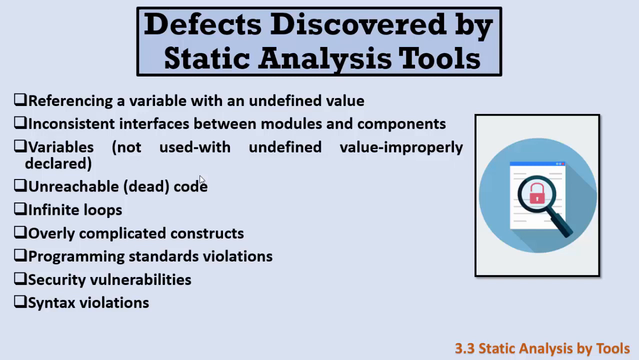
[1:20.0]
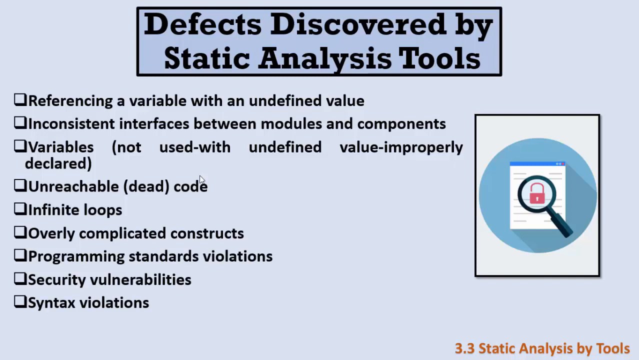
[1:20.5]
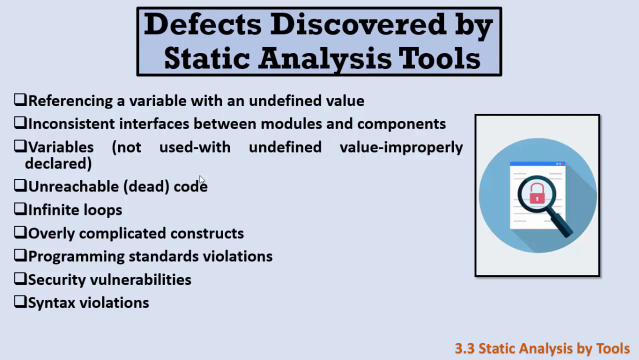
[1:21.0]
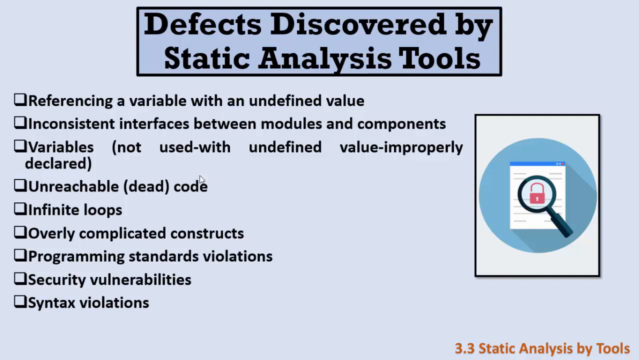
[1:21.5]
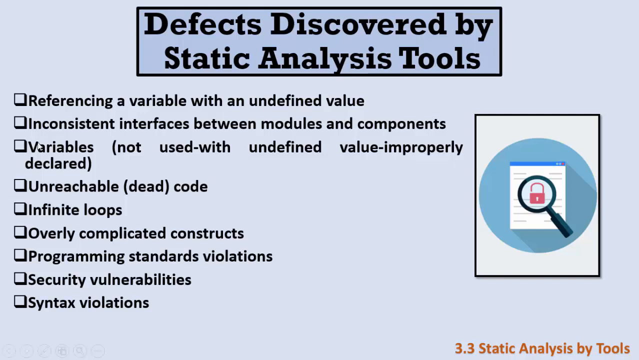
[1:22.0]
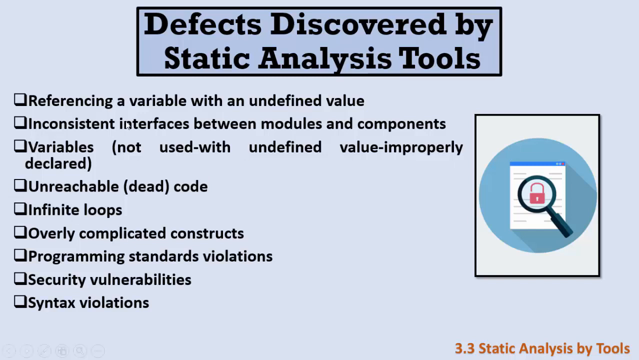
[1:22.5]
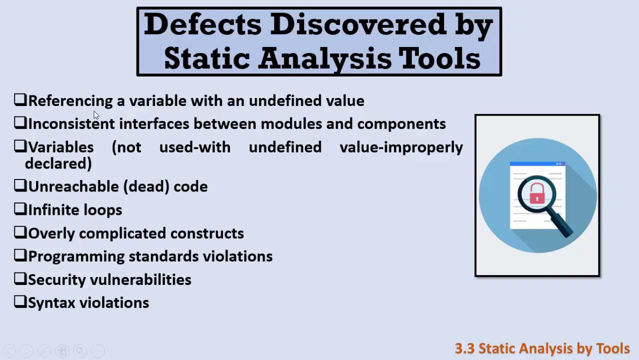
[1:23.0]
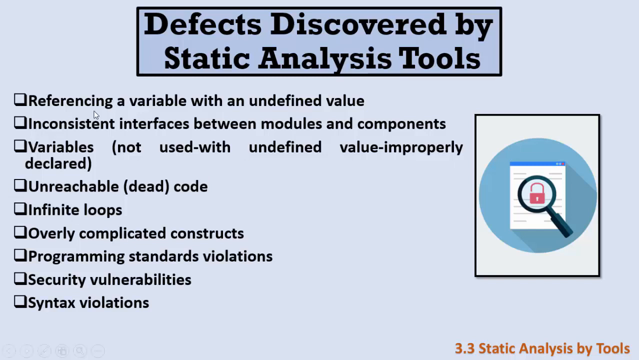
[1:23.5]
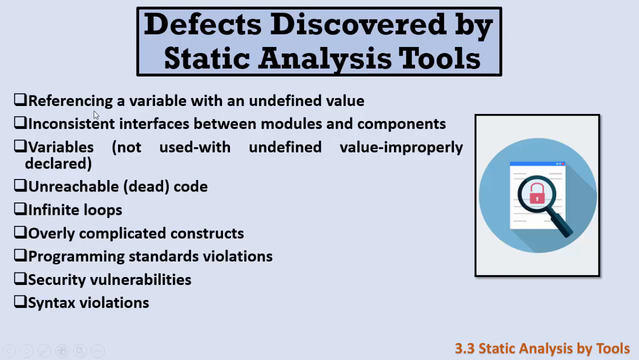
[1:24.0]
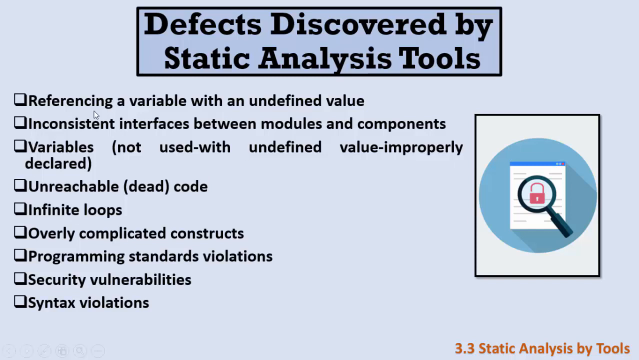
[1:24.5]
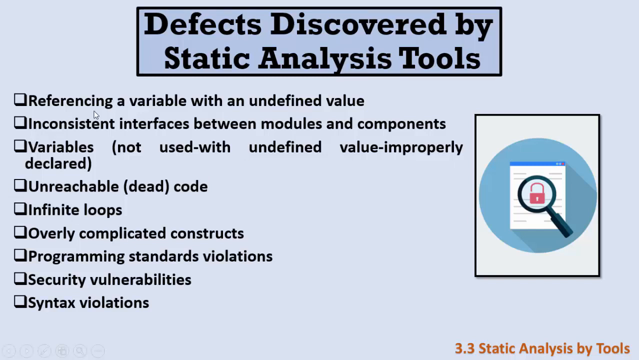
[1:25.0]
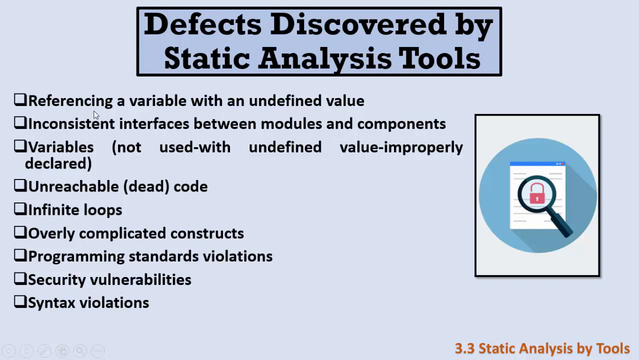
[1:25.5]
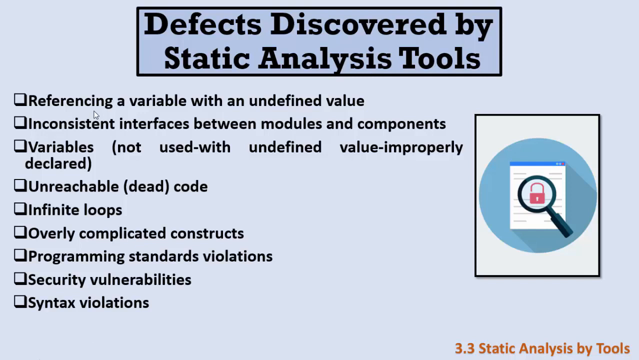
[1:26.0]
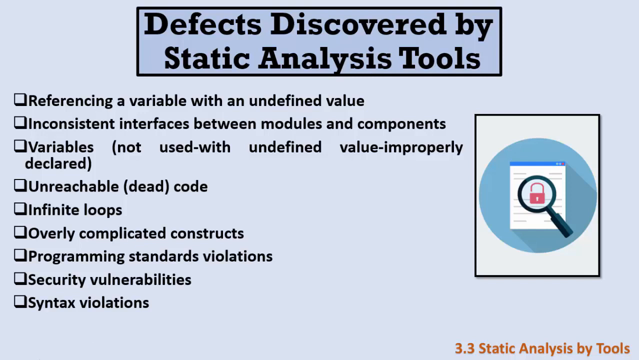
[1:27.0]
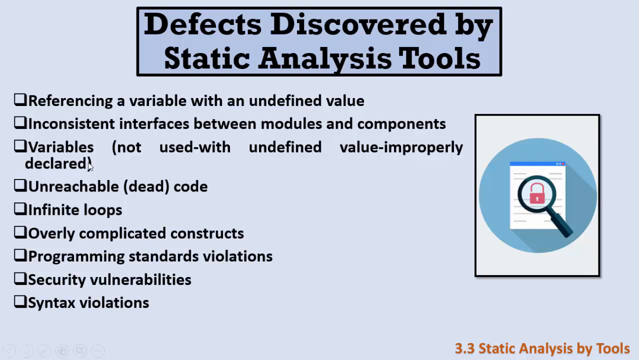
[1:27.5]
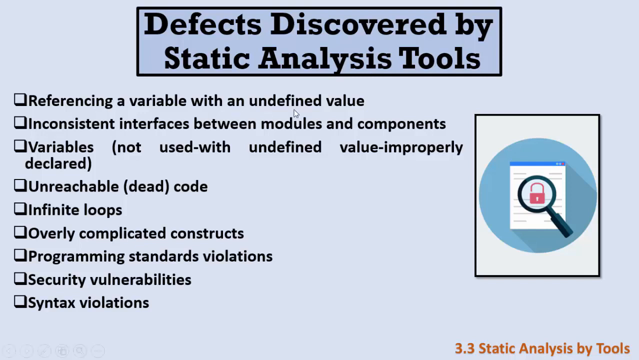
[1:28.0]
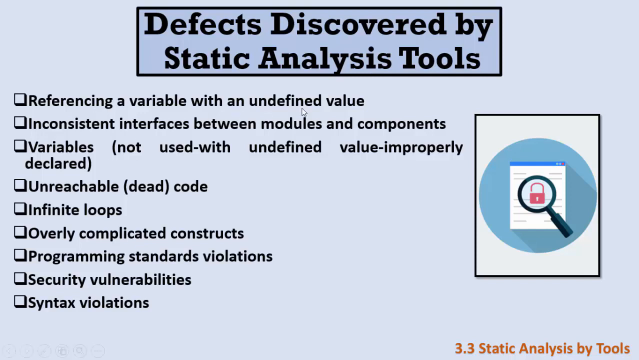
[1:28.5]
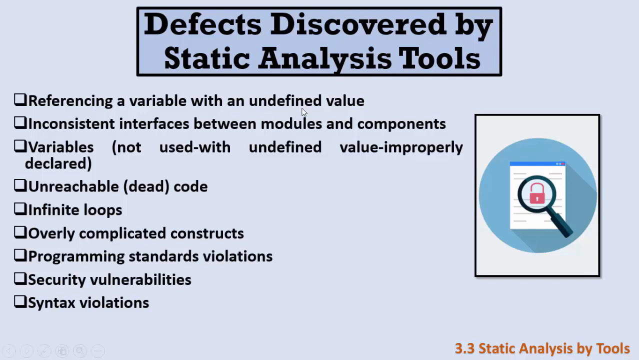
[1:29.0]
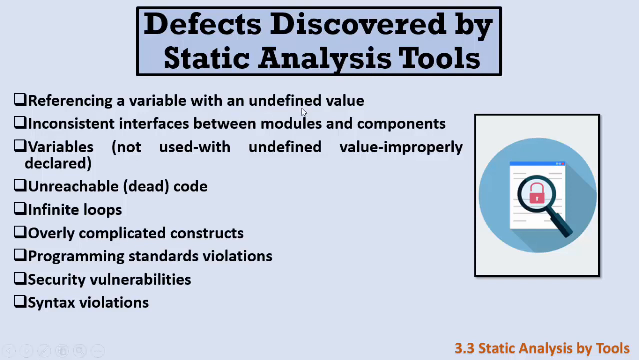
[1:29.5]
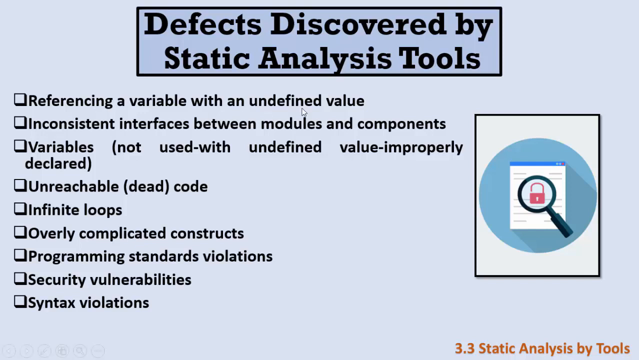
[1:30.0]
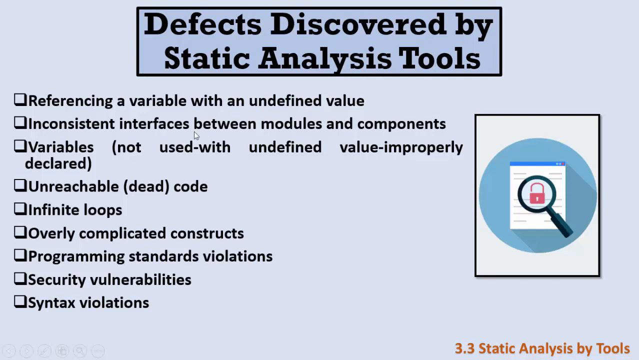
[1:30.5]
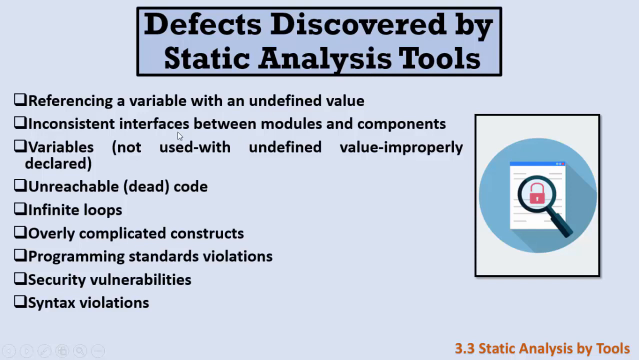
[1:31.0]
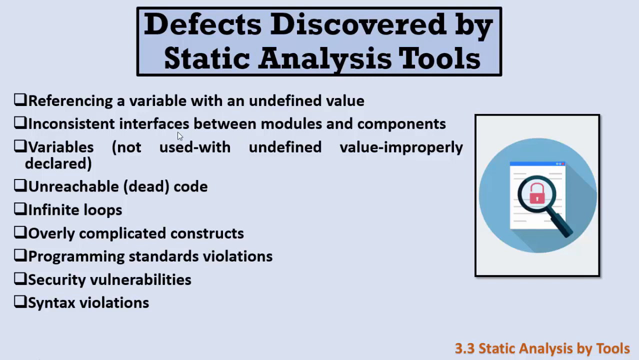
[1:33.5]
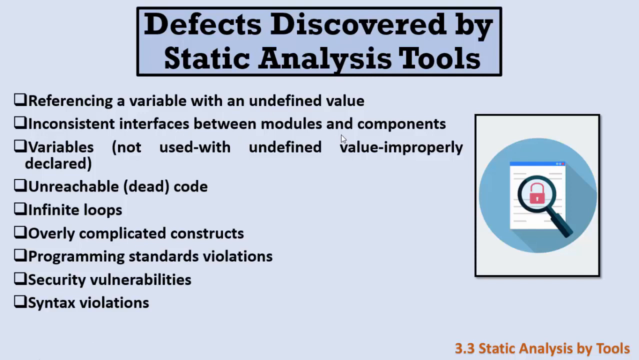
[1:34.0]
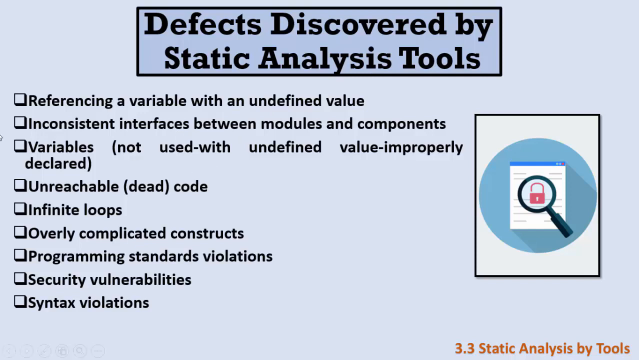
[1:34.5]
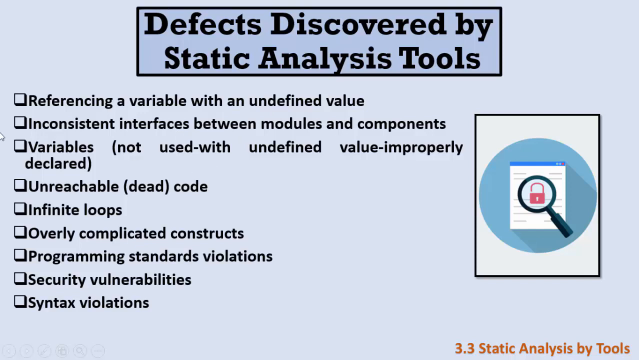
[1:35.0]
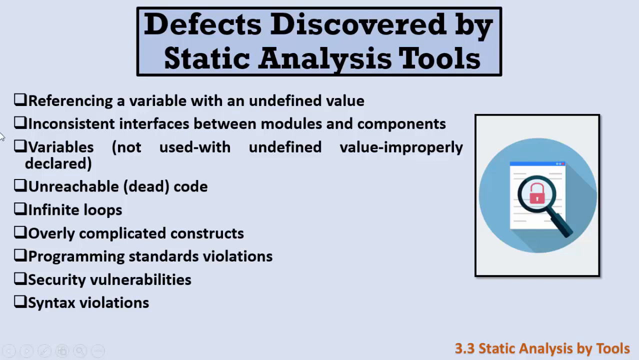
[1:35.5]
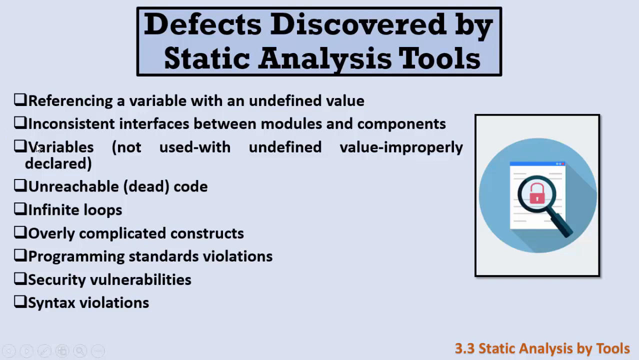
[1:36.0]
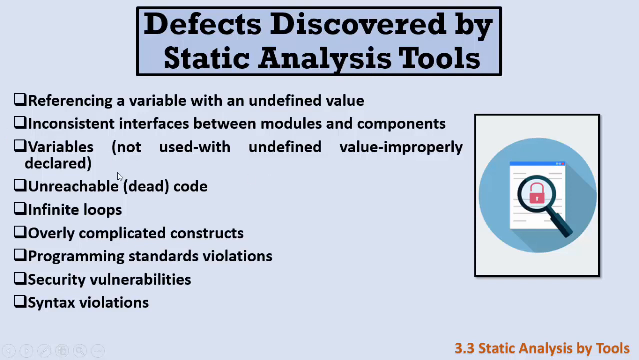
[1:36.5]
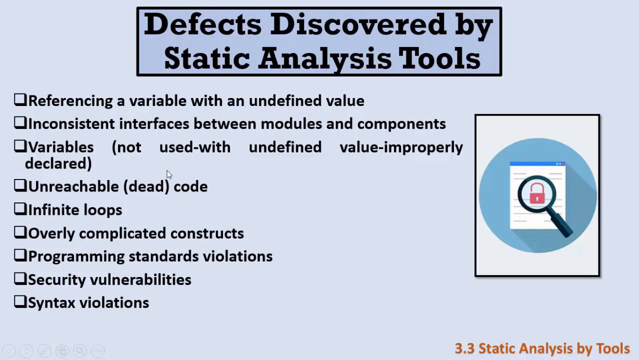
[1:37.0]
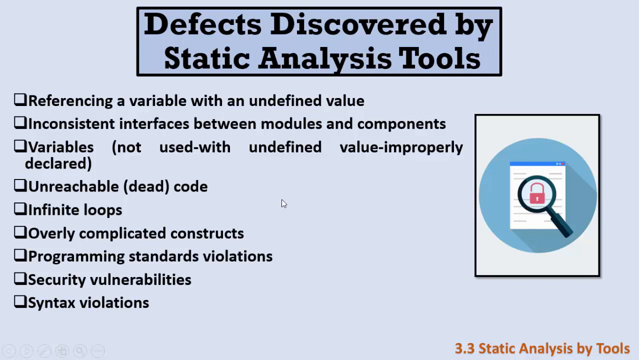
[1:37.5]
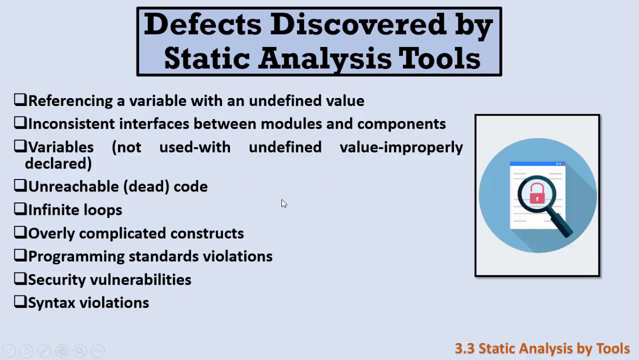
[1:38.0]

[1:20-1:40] The text remains the same, with the title "Defects Discovered by Static Analysis Tools" across the top. The points are "Referencing a variable with an undefined value", "Inconsistent interfaces between modules and components", "Variables not used with undefined value, improperly declared", "Unreachable or dead code", "Infinite loops", "Overly complicated constructs", "Programming standards violations", "Security vulnerabilities" and "Syntax violations". On the right side of the screen is a vertical white rectangle with a blue circle inside it; in the centre of the blue circle is a screen, in the centre of the screen is a pink padlock, and the padlock is seen through a black magnifying glass. The text stays on screen the whole time, and the only movement is the cursor, which circles around and underlines text to place emphasis on it.